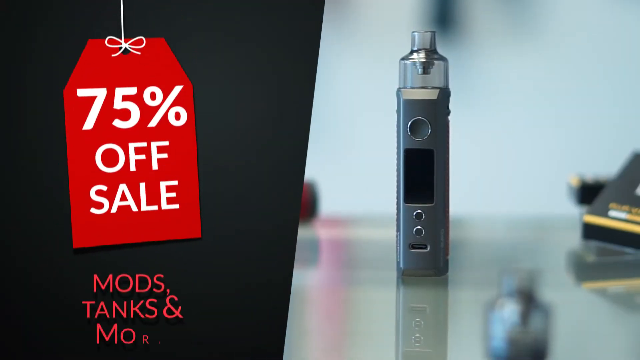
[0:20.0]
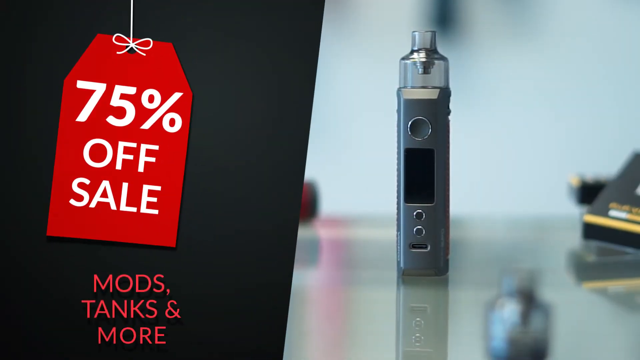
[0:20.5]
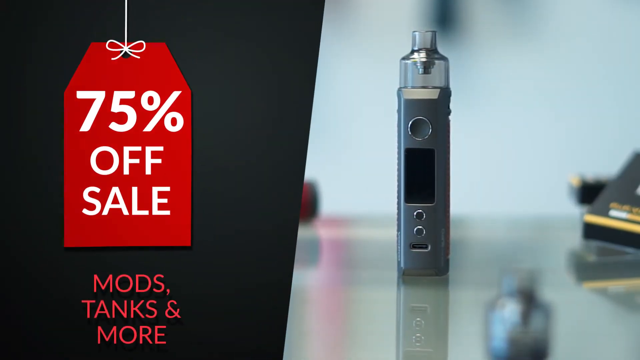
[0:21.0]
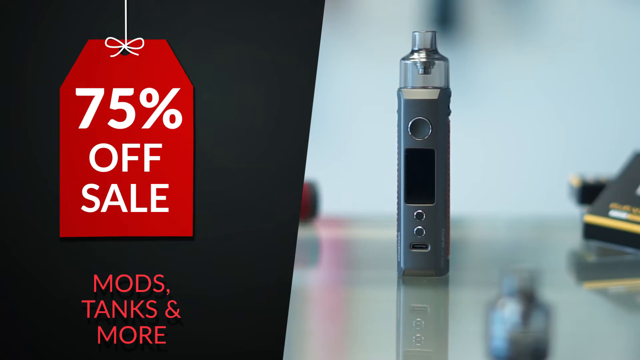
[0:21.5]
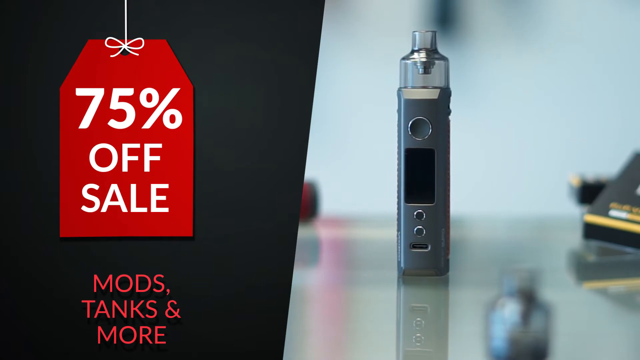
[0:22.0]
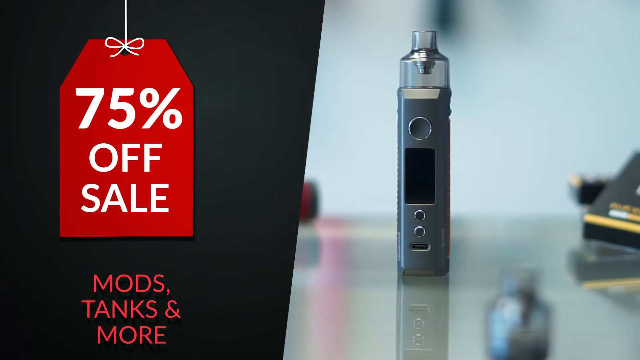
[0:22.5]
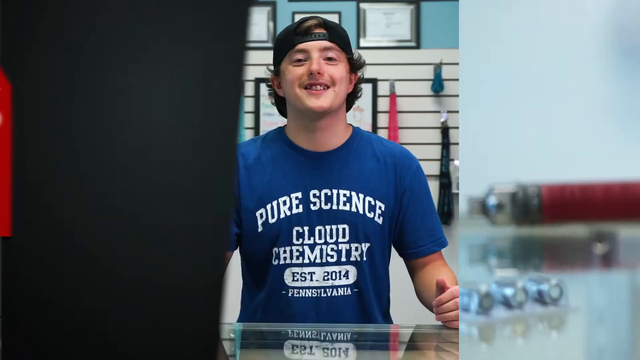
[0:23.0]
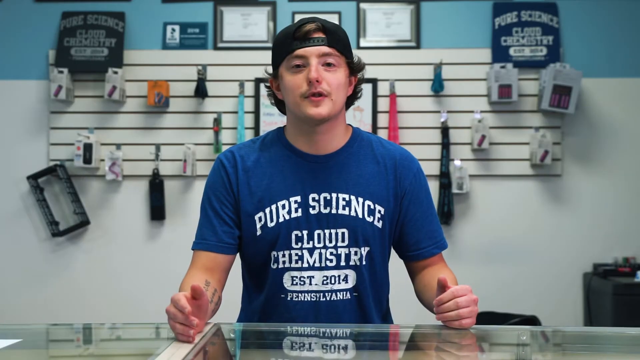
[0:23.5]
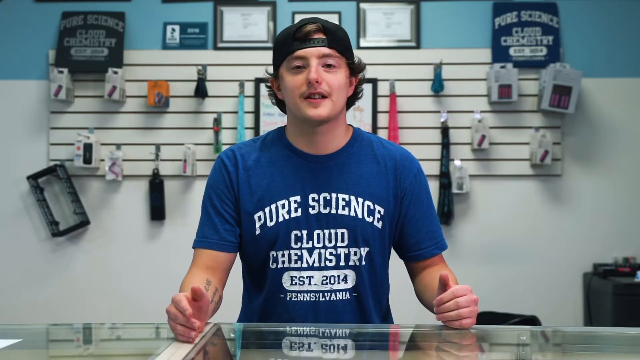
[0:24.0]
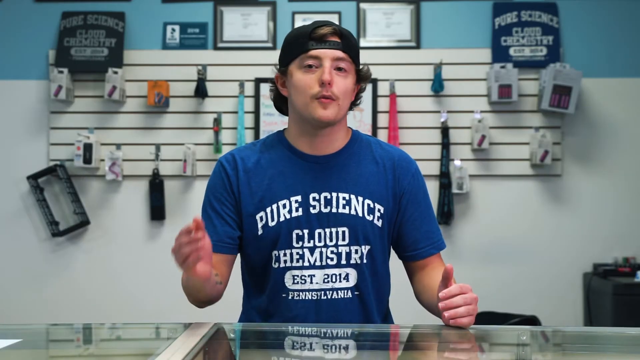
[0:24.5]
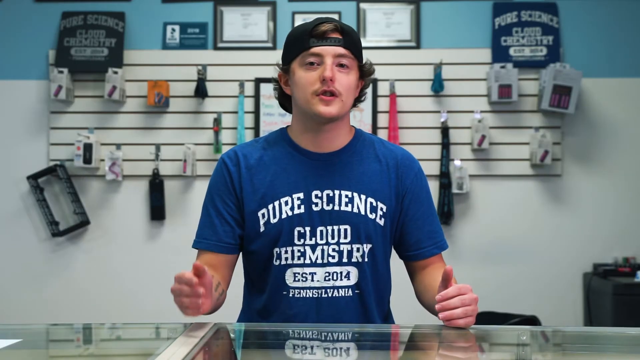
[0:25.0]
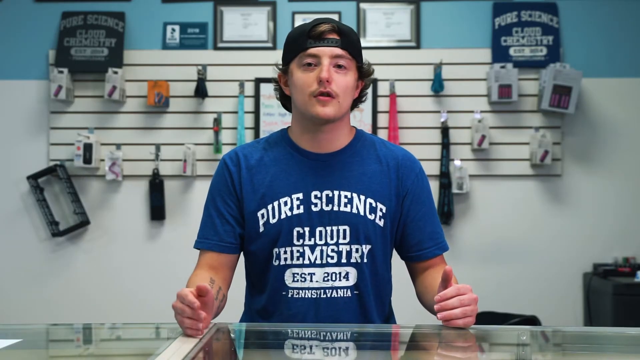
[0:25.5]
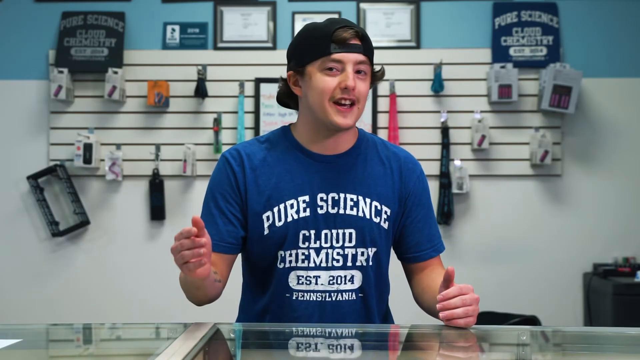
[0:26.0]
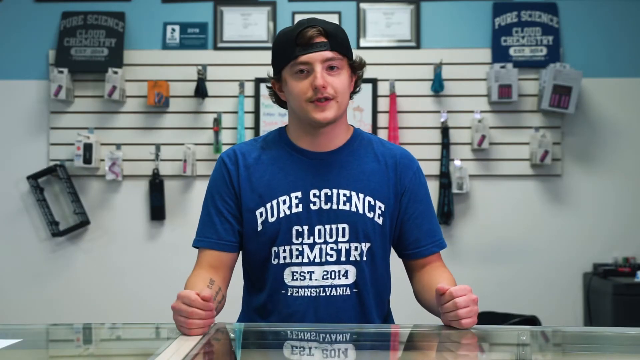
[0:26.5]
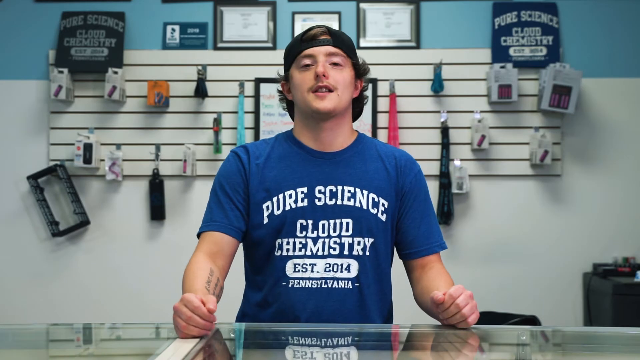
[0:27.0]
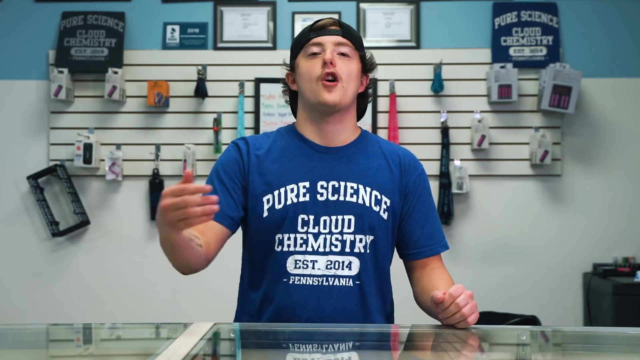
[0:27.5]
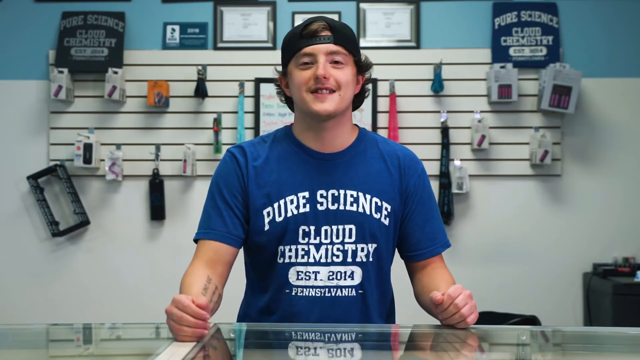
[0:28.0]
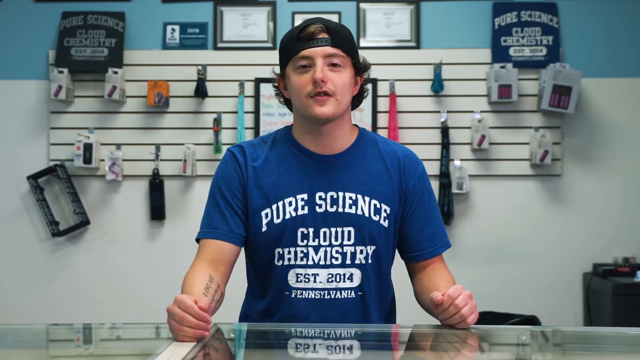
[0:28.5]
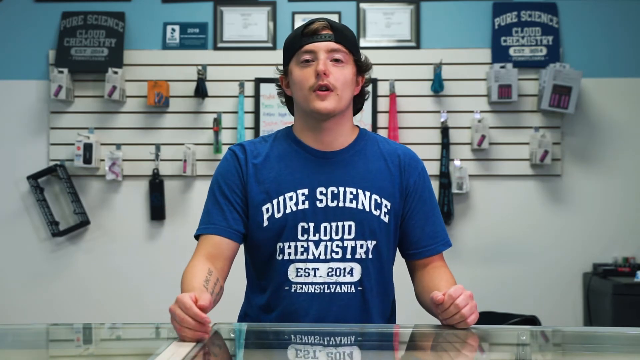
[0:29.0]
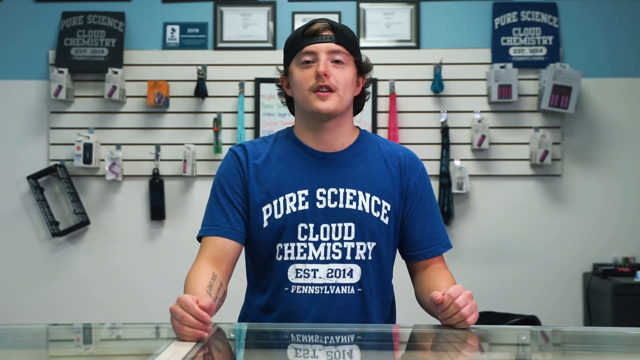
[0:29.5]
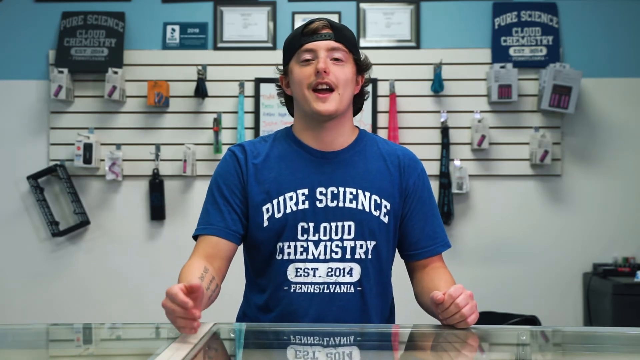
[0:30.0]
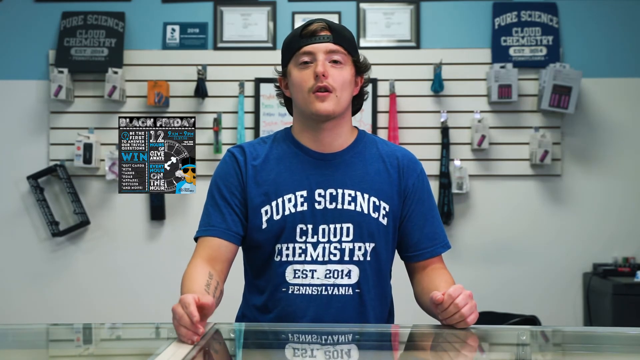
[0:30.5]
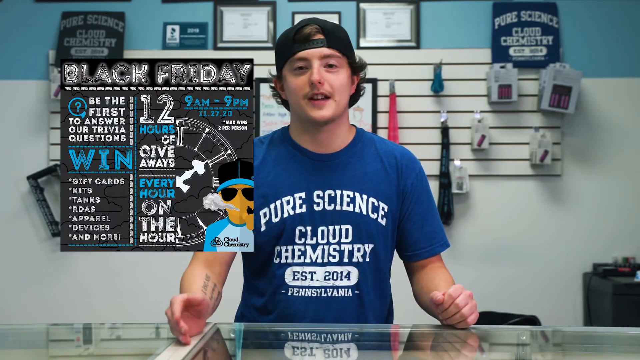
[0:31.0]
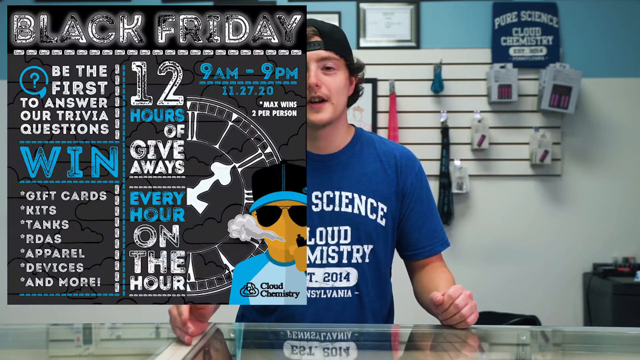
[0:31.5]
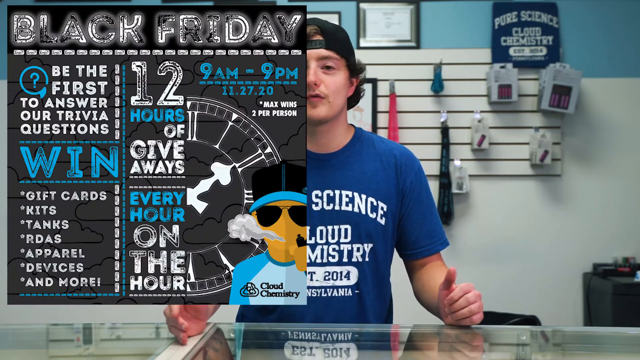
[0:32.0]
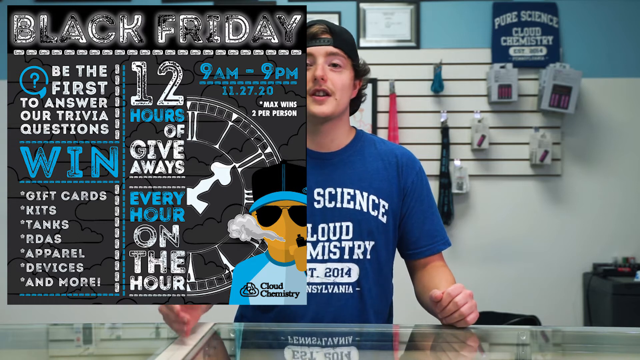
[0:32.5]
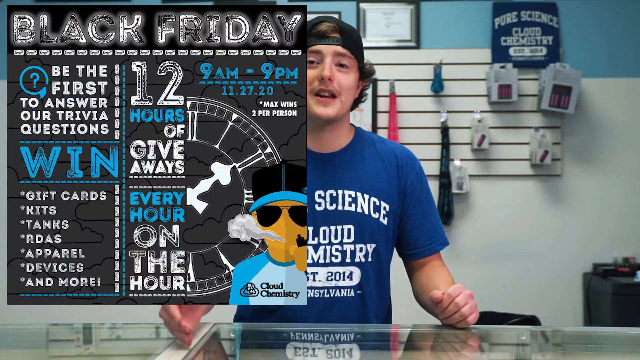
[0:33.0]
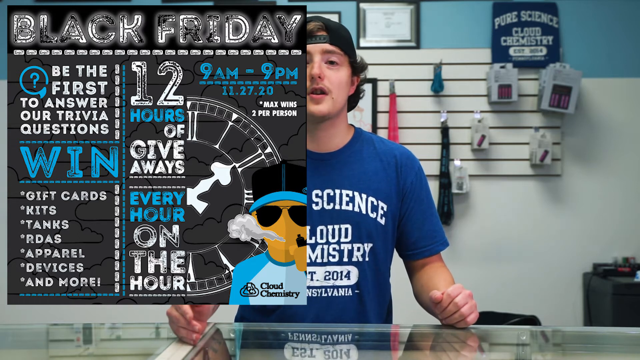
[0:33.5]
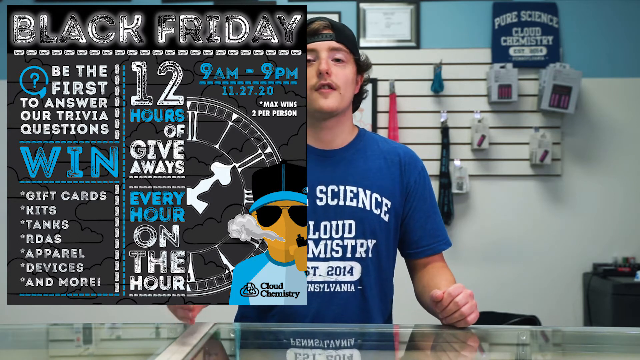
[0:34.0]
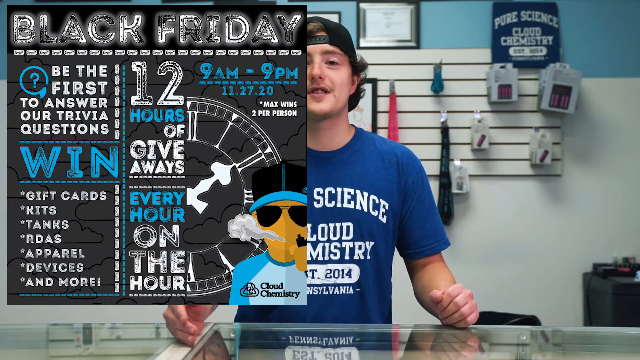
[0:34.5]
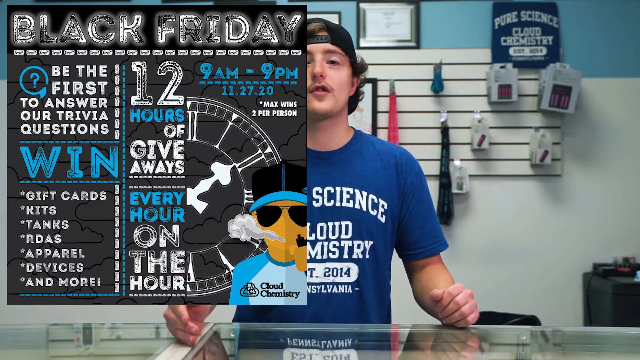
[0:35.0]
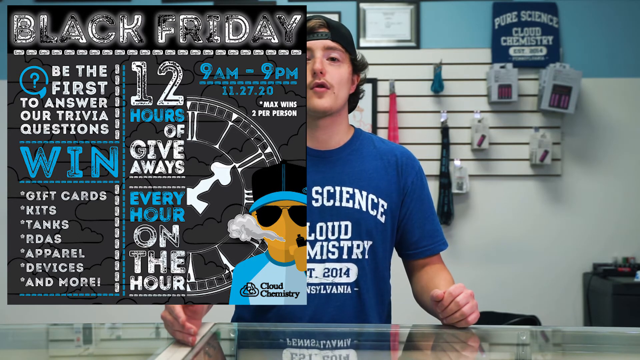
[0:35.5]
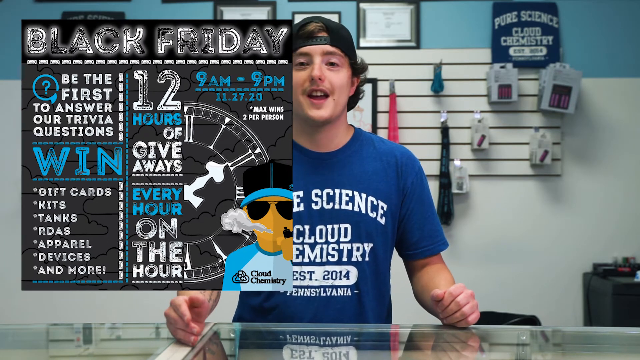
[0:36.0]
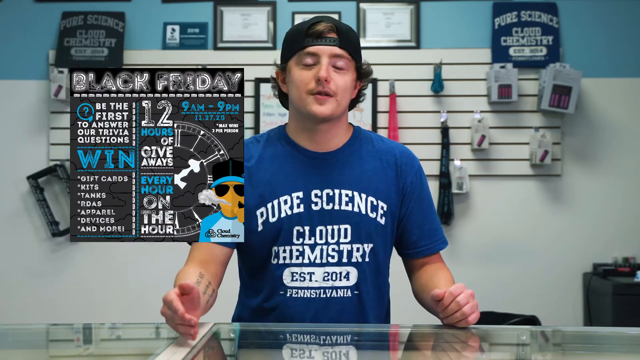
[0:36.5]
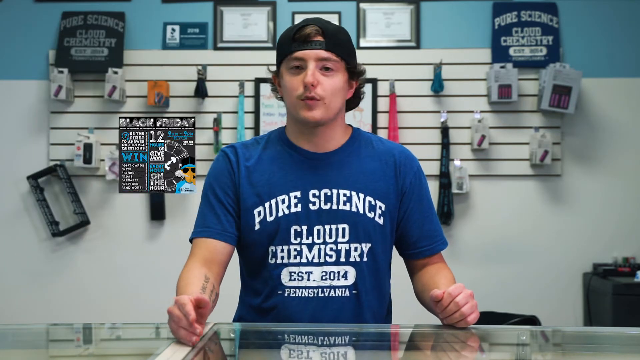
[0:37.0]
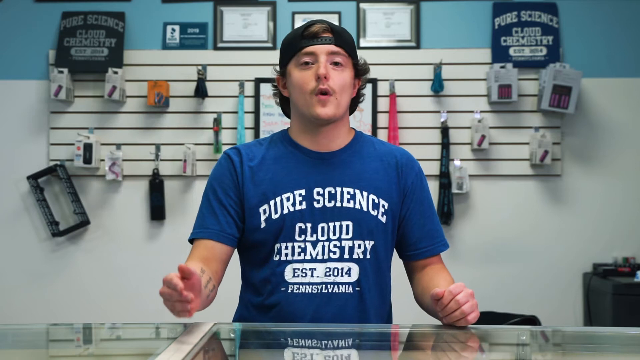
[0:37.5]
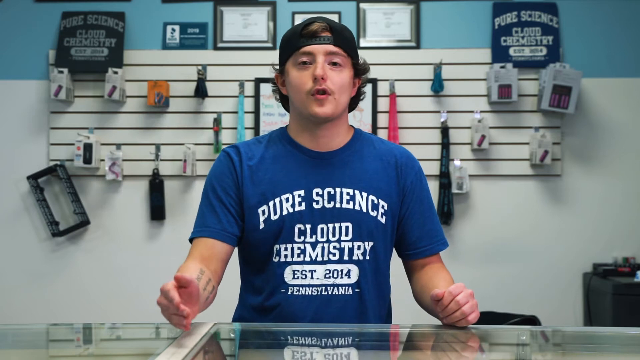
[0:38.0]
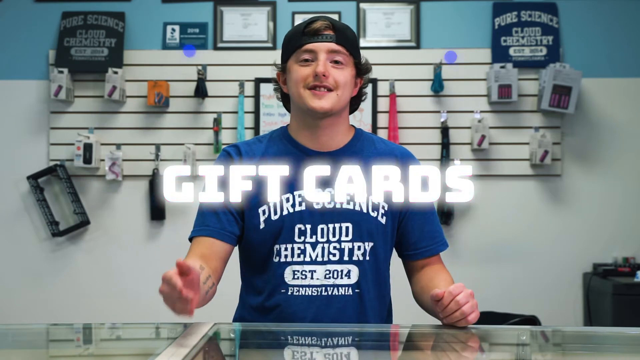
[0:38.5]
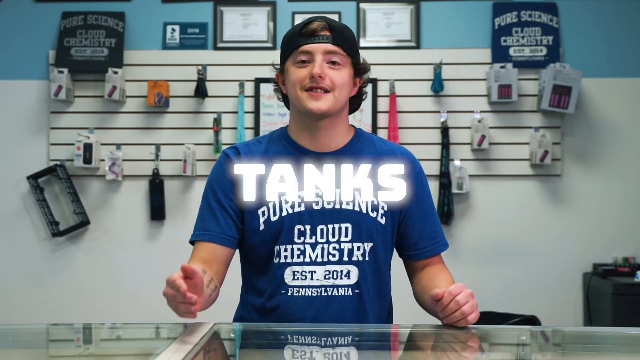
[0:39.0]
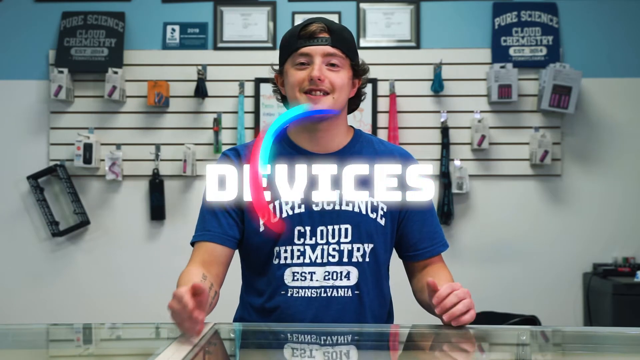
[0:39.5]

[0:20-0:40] The 75% off screen appears, with a black background and a red tag saying "75% off"; under that it says "mods tanks and more." The scene returns to Taylor standing at his counter in his blue t-shirt and backwards black hat, with the white and blue wall behind him, still gesturing a lot with his hands. A pop-up with a black background and white lettering appears for Black Friday, offering the chance to win gift cards, apparel, and more, with 12 hours of giveaways and trivia questions every hour on the hour. It says "be the first to answer our trivia questions," with only two wins per person max. That screen goes away and the video returns to Taylor. Then words flash on the screen one at a time in white text: "gift cards," "mods," "devices," and "and so much more." The 75% off screen returns, with the red price tag hanging down on the left-hand side with white lettering and a mod on the right-hand side. At the bottom of the tag it says "mods, tanks, and more."